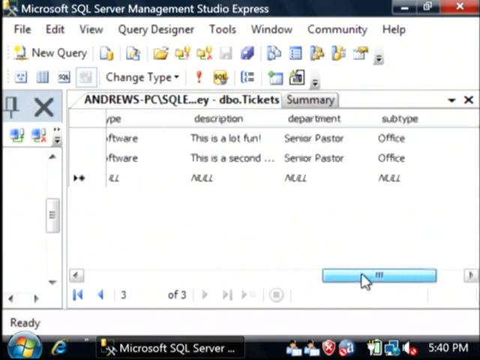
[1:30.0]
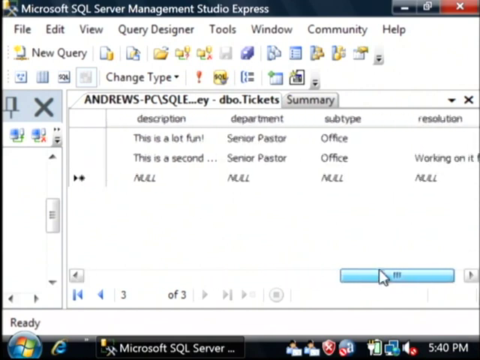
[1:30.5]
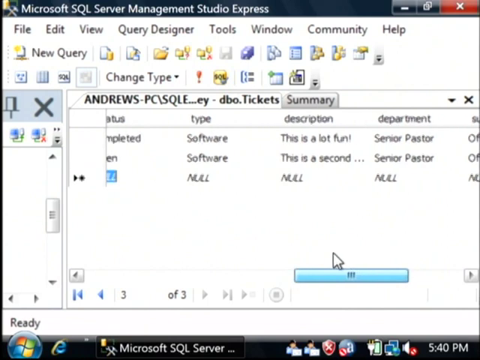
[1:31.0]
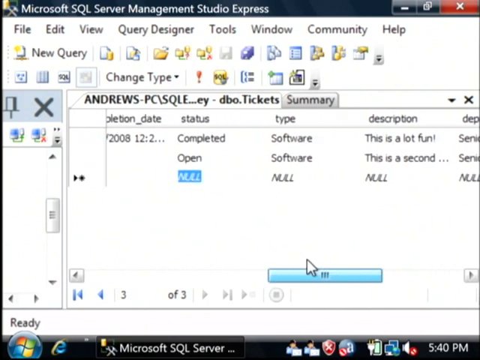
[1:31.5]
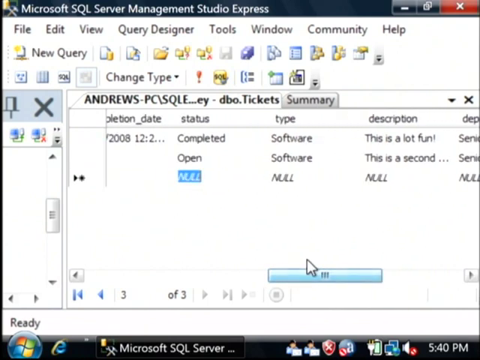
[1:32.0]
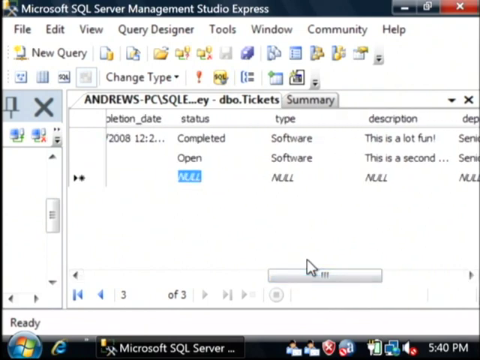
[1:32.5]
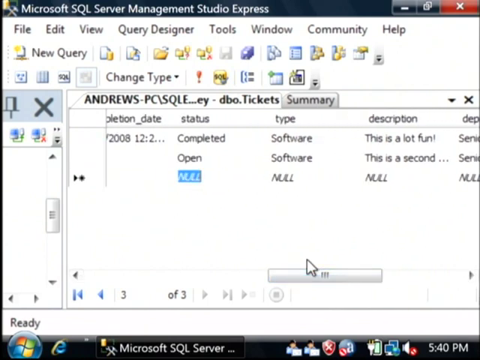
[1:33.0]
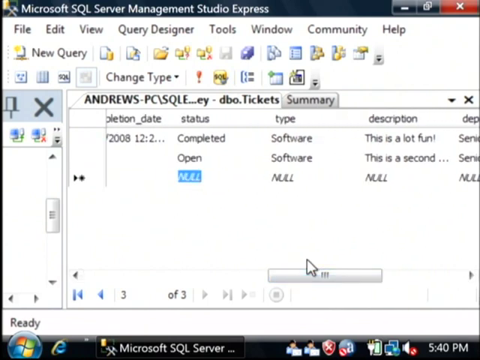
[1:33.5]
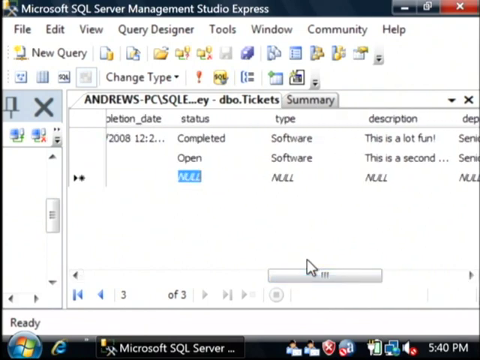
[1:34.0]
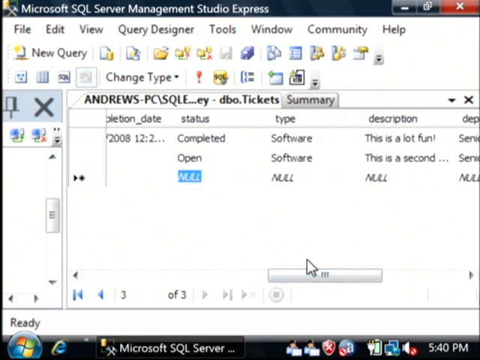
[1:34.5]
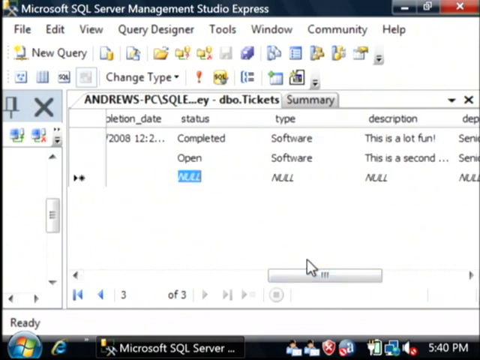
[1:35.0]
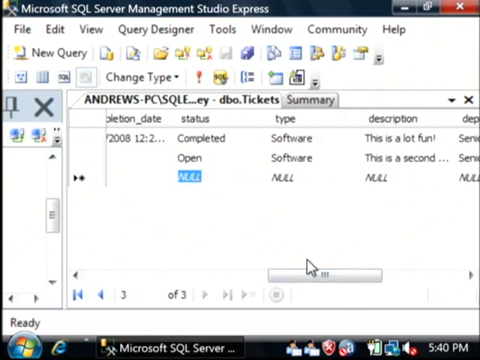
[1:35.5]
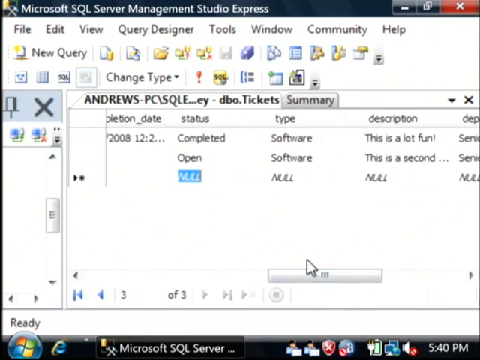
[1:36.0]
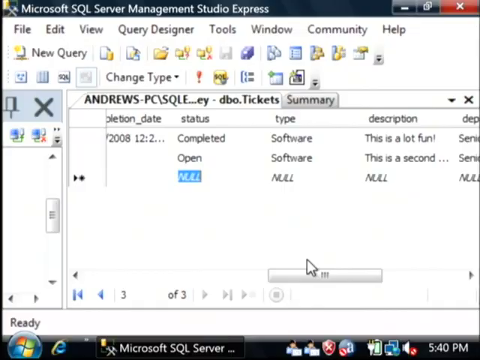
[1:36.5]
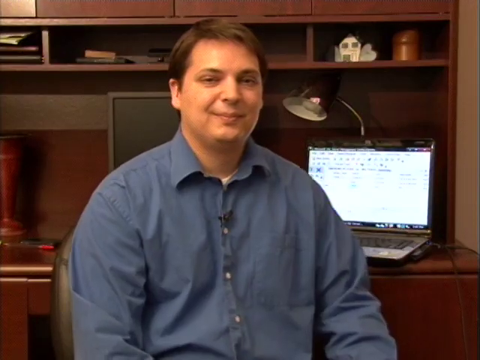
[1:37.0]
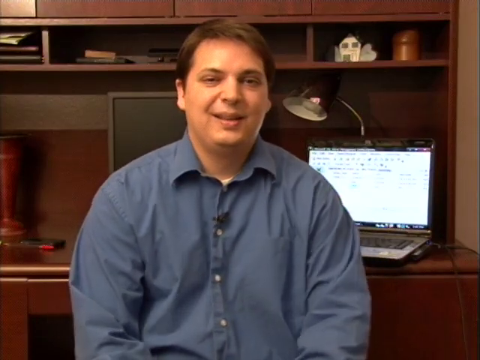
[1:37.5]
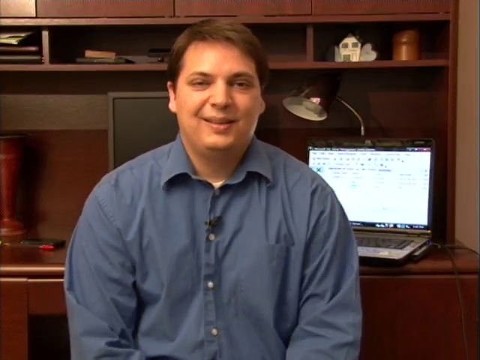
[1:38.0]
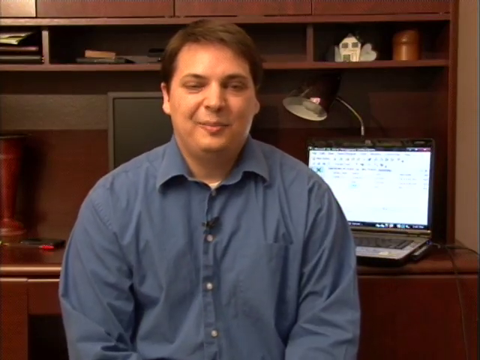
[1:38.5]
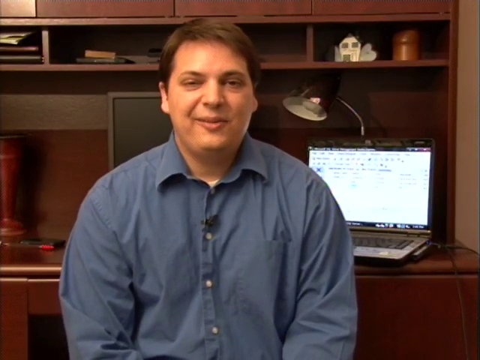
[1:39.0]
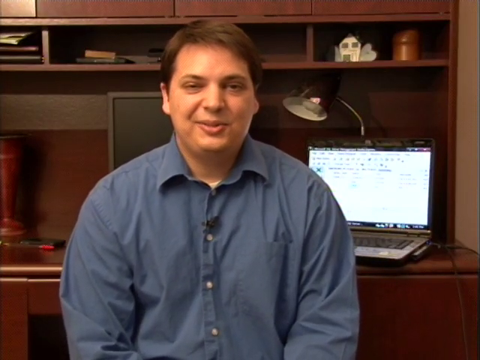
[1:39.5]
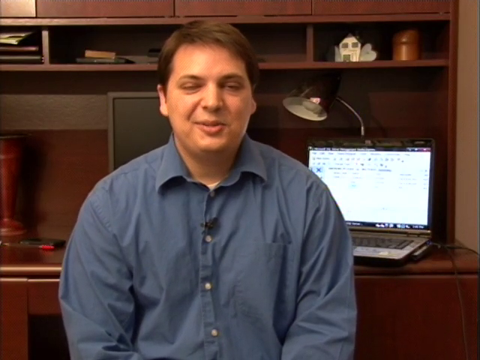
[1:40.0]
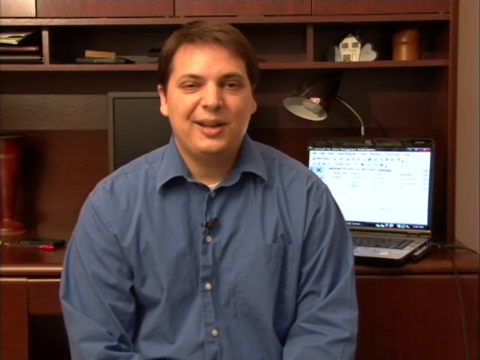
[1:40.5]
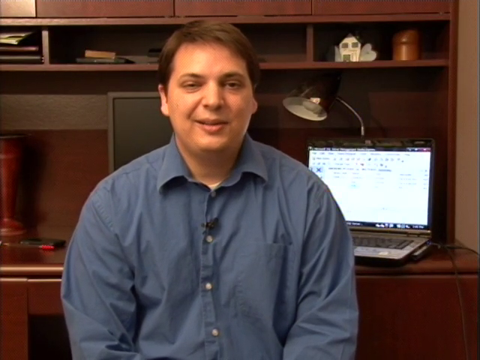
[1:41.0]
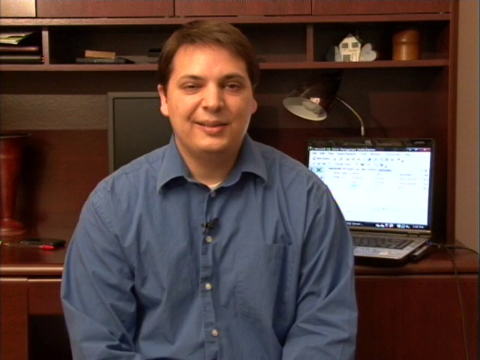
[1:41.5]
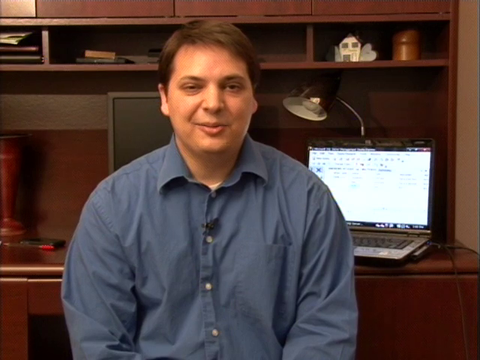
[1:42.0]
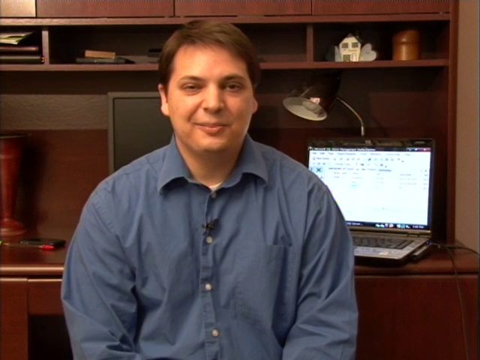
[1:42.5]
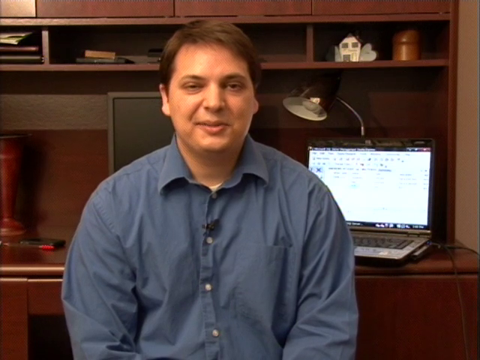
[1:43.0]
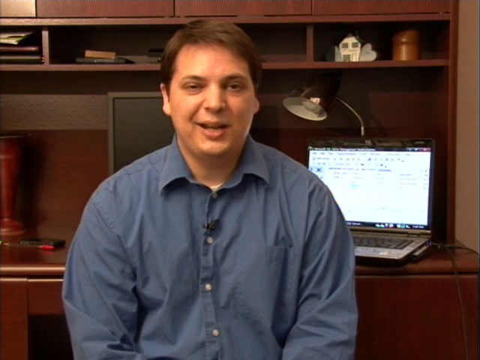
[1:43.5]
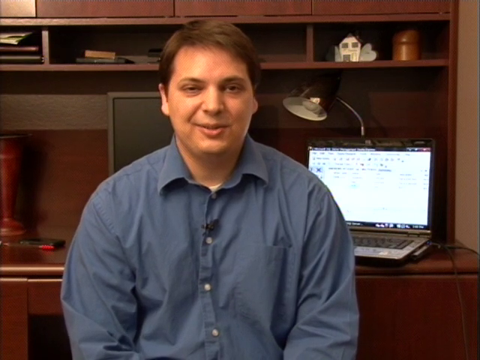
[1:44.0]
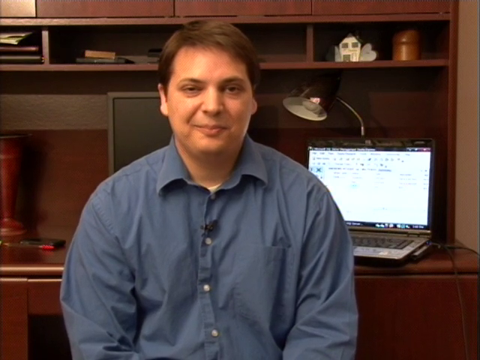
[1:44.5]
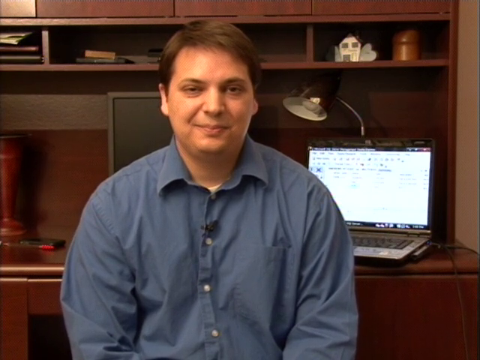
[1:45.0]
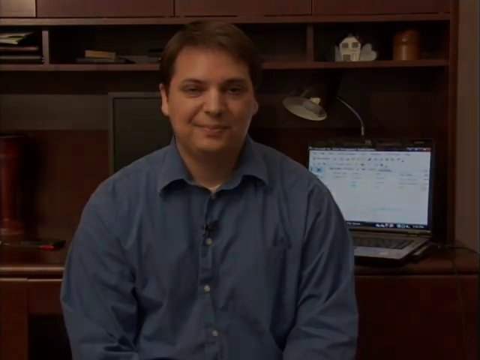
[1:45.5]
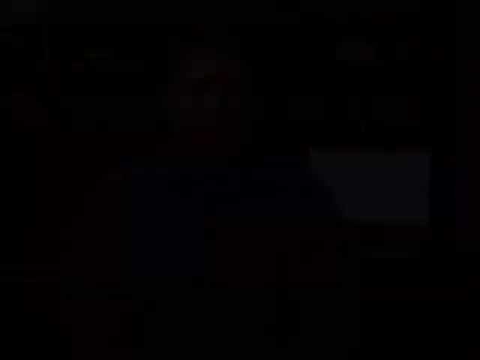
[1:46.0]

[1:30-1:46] The screen is recorded while the user works in Microsoft SQL Server Management Studio, looking at a database called Tickets. The user moves a vertical scroll bar back and forth to navigate the columns so each column in the table can be seen. The video then transitions to a man sitting on a chair in a room, facing the camera. Behind him is an open laptop showing the same screen seen earlier on the computer screen. The laptop is on a desk with a monitor; the desk is dark wood and old-fashioned in design. The man talks toward the camera and has a microphone attached to his shirt. This appears to be the outro of the video.